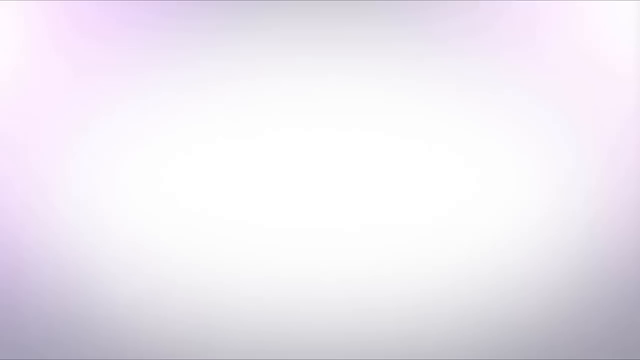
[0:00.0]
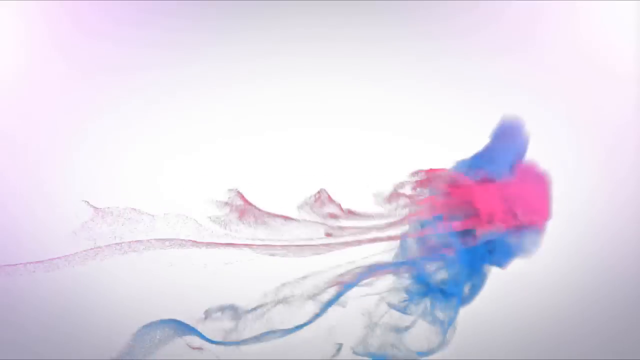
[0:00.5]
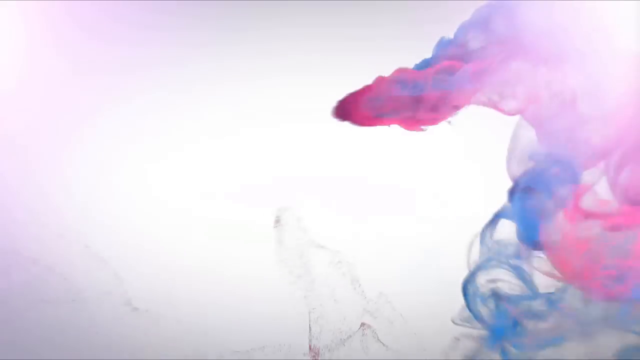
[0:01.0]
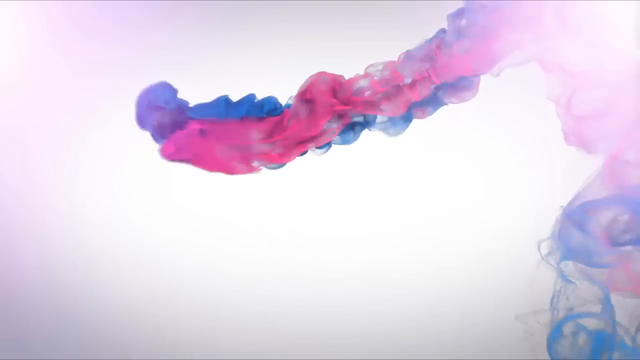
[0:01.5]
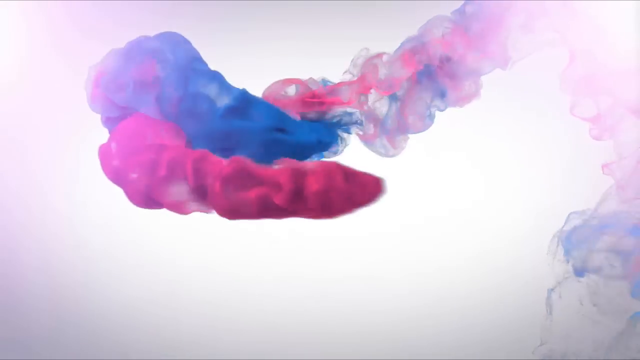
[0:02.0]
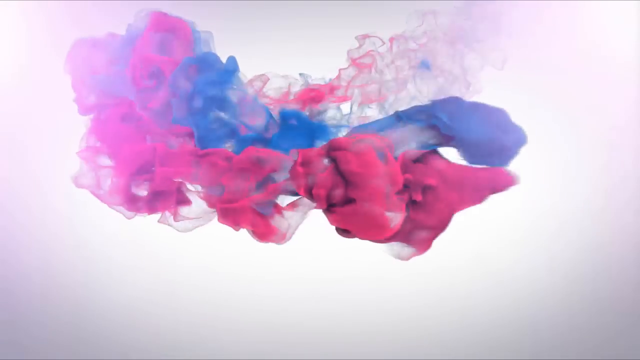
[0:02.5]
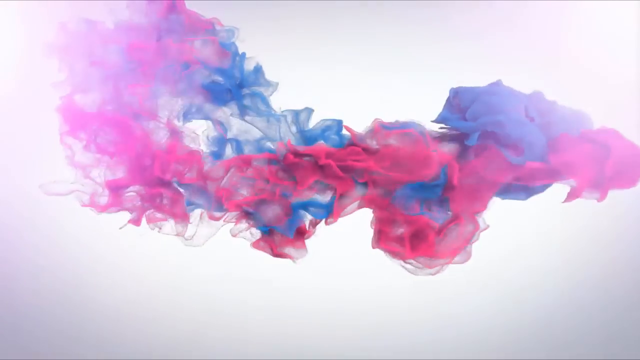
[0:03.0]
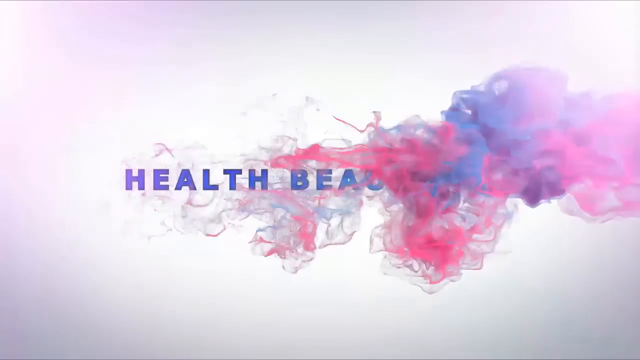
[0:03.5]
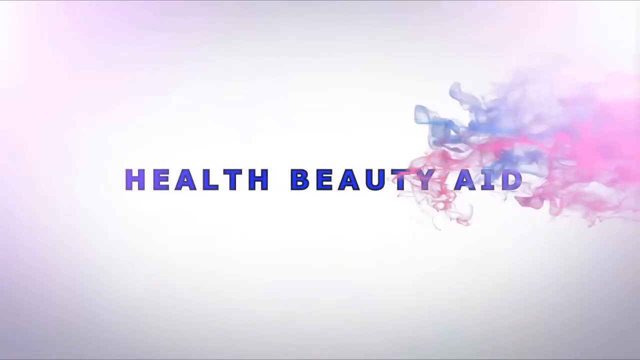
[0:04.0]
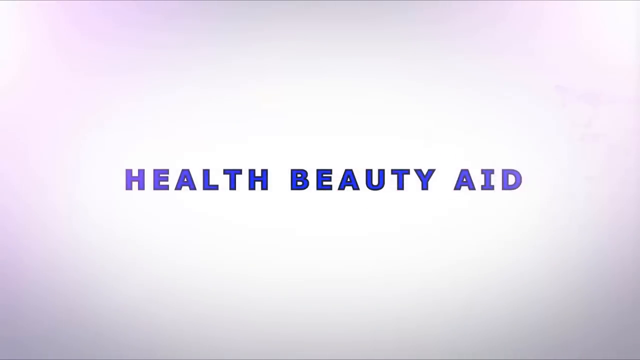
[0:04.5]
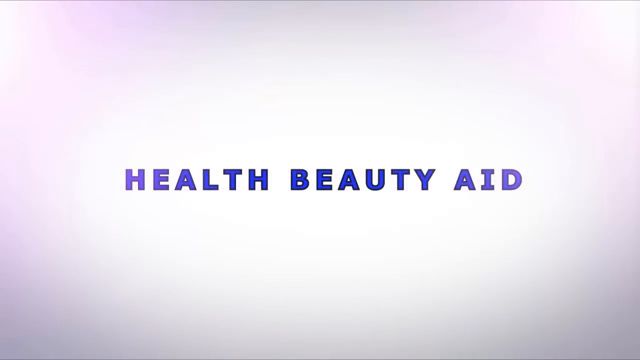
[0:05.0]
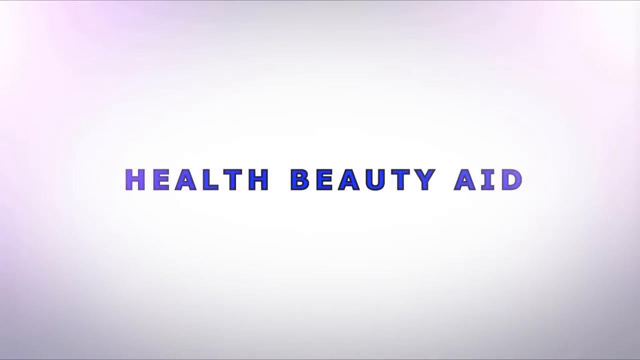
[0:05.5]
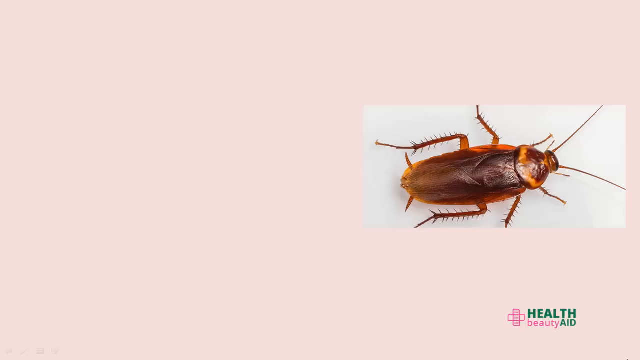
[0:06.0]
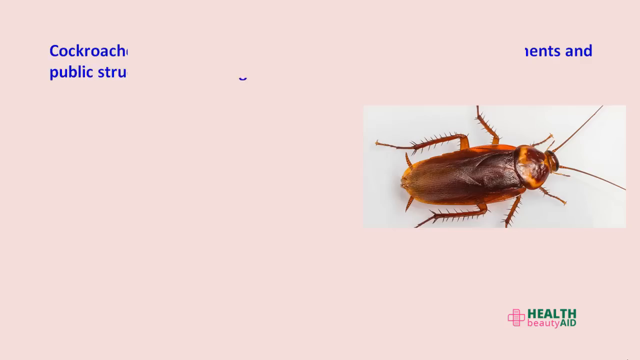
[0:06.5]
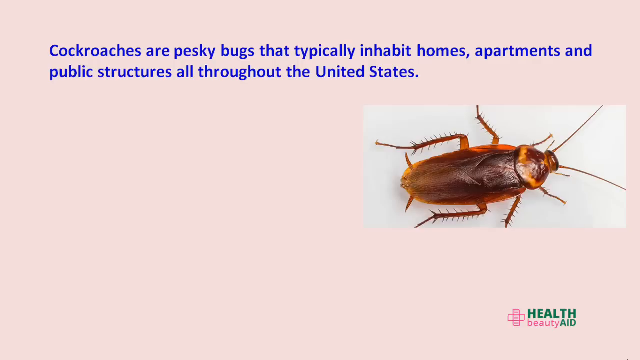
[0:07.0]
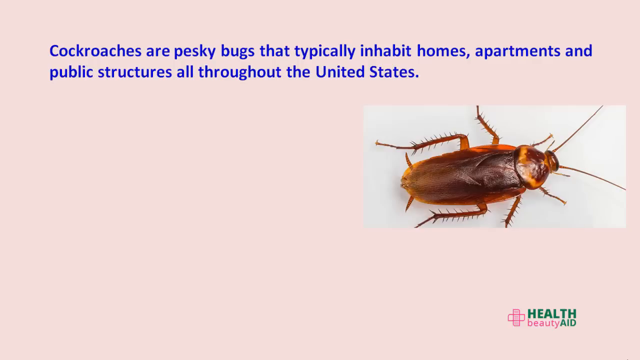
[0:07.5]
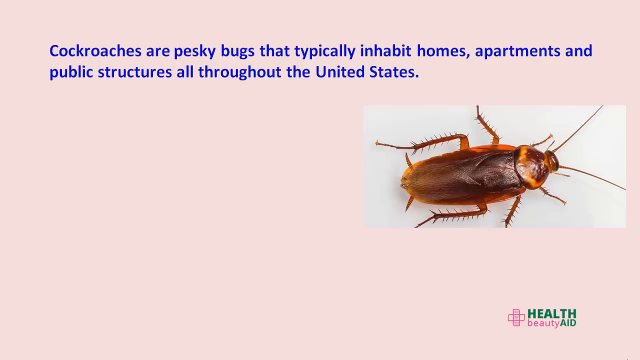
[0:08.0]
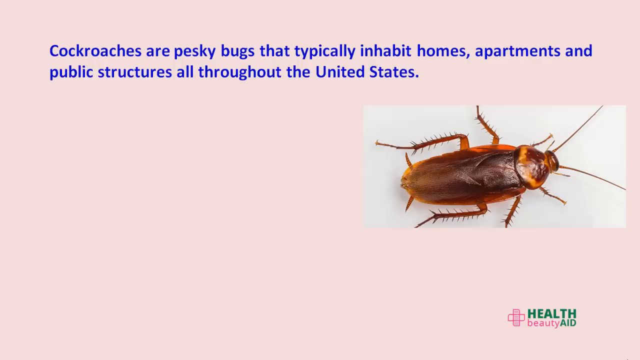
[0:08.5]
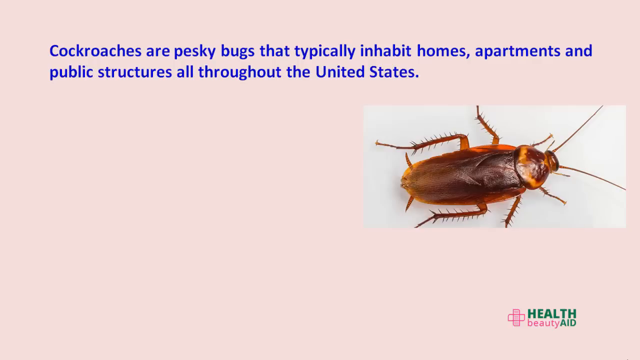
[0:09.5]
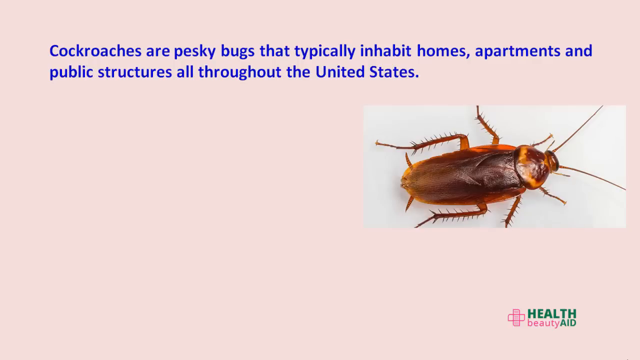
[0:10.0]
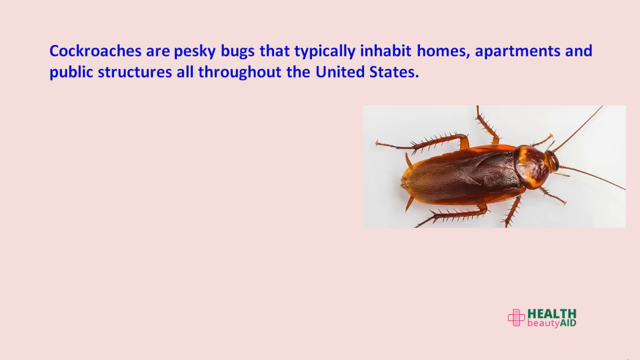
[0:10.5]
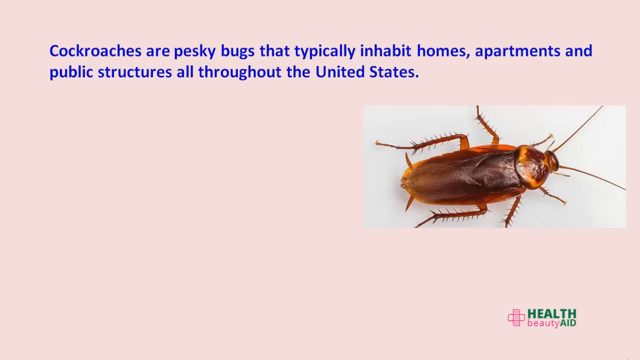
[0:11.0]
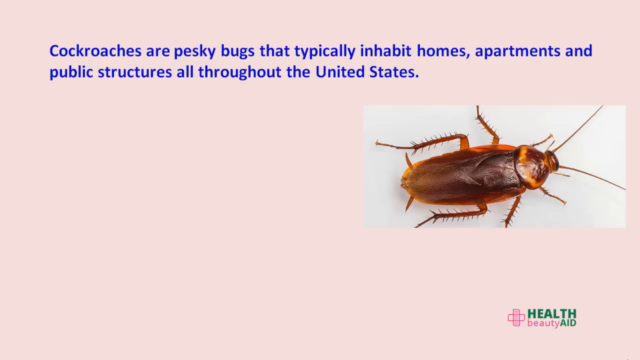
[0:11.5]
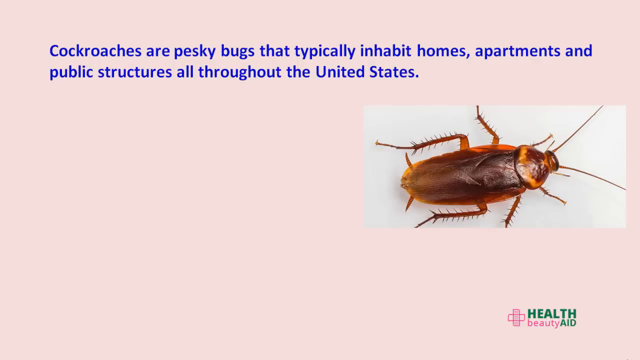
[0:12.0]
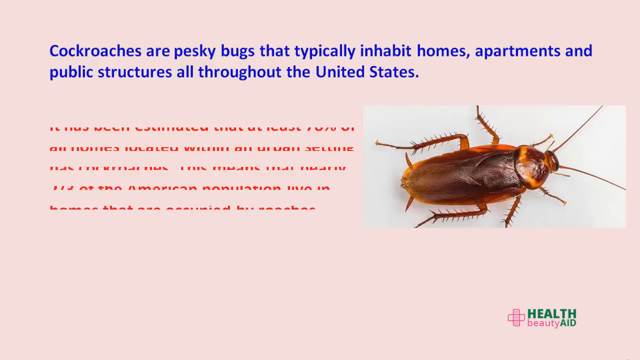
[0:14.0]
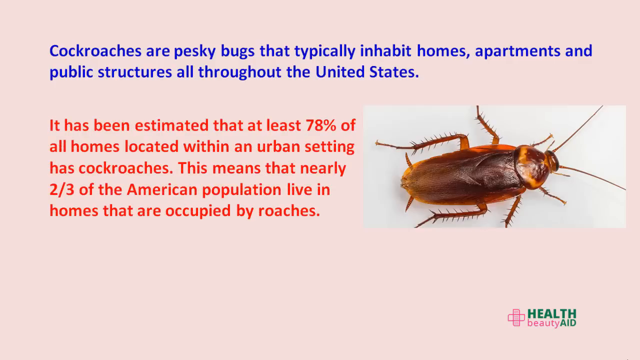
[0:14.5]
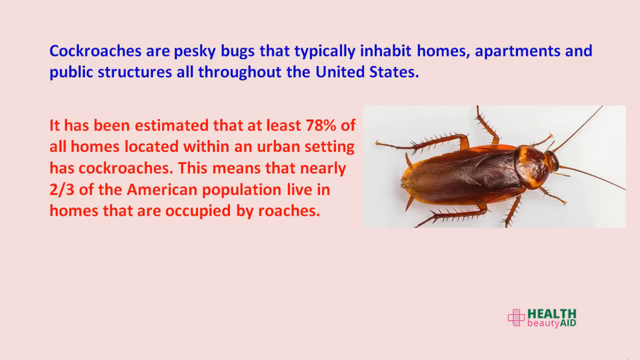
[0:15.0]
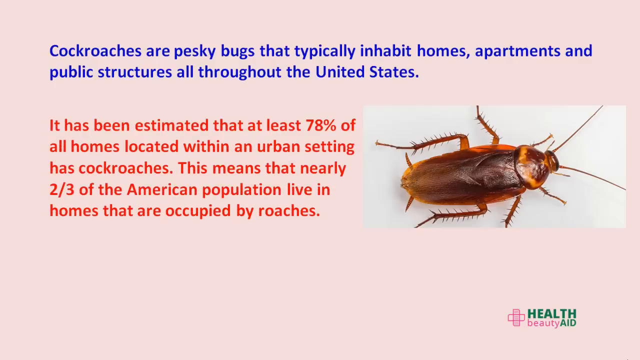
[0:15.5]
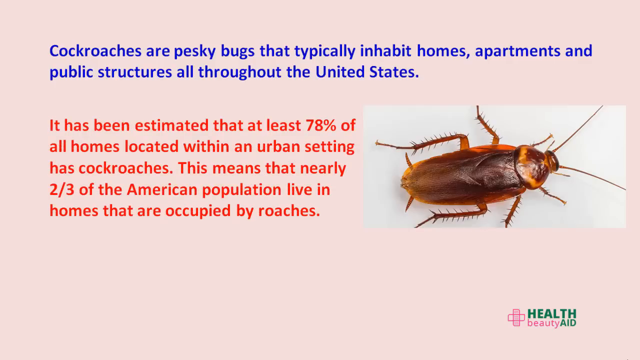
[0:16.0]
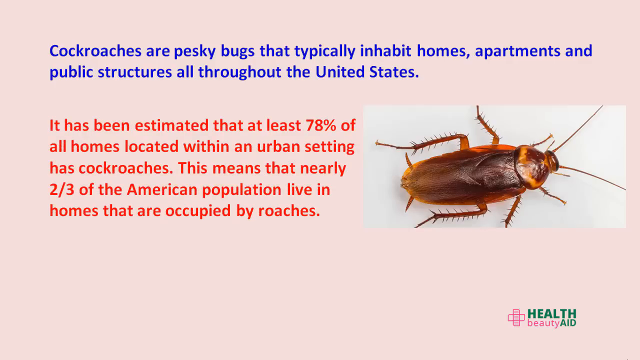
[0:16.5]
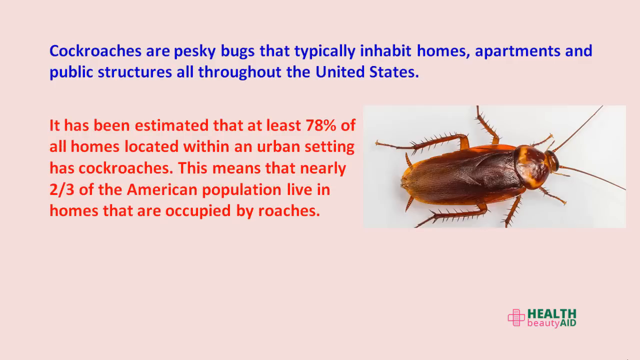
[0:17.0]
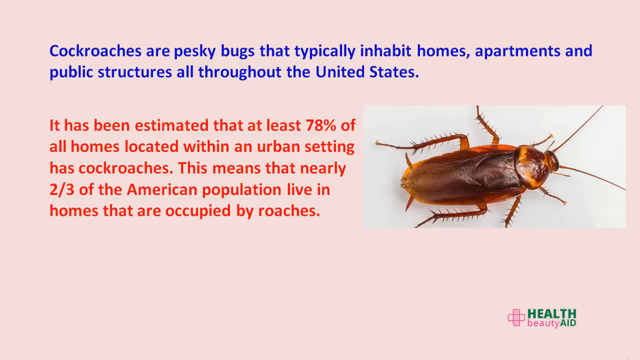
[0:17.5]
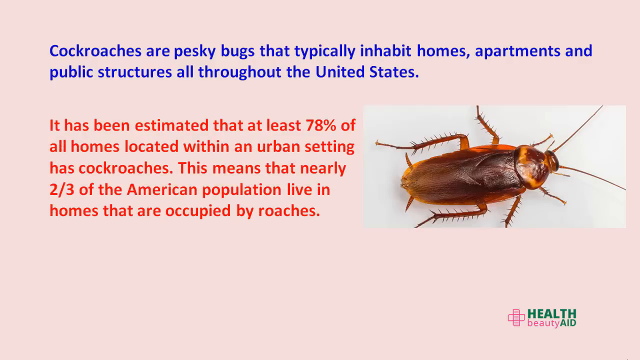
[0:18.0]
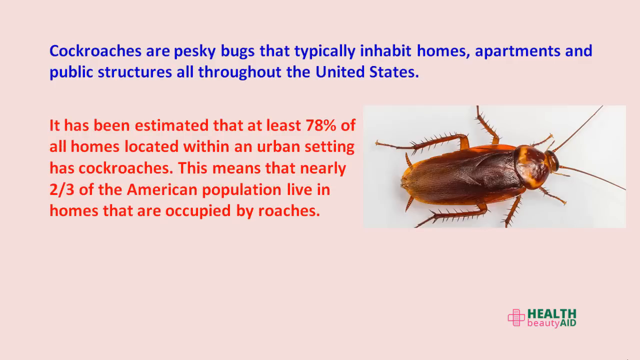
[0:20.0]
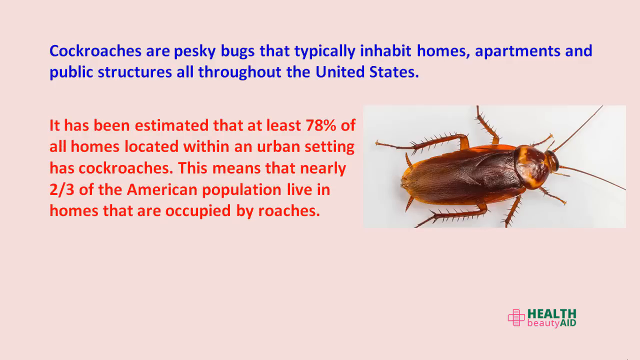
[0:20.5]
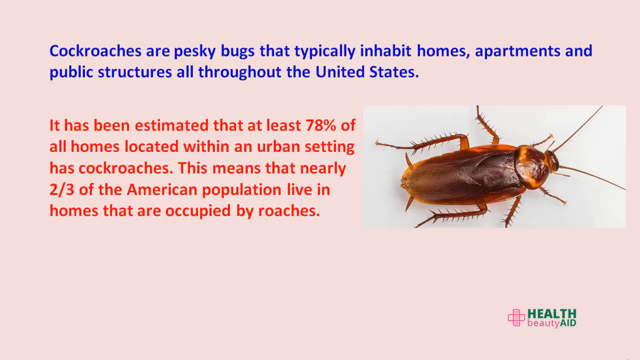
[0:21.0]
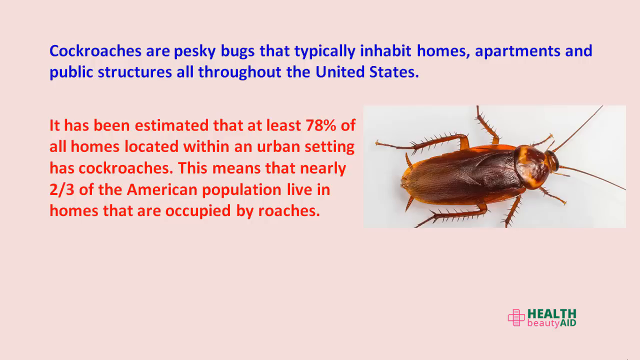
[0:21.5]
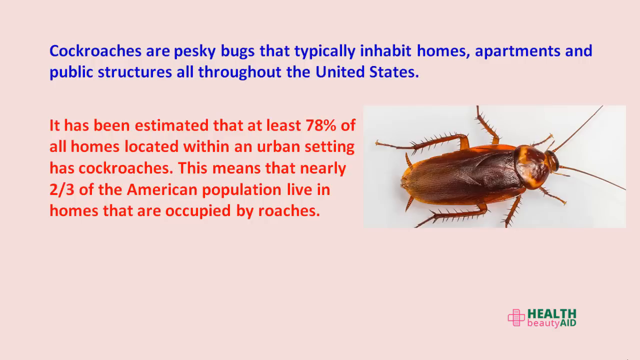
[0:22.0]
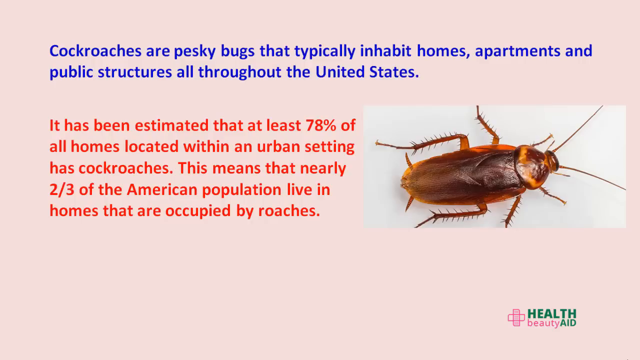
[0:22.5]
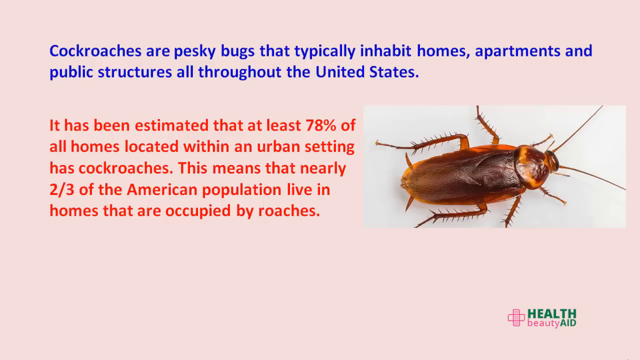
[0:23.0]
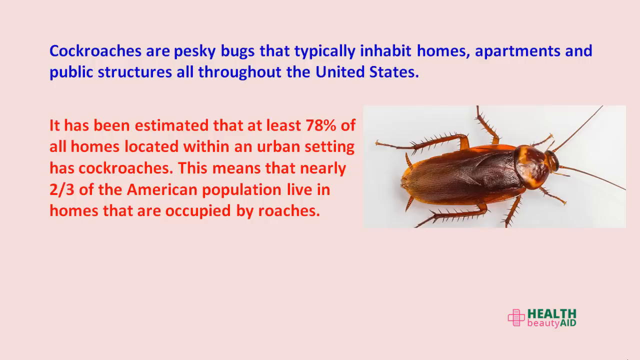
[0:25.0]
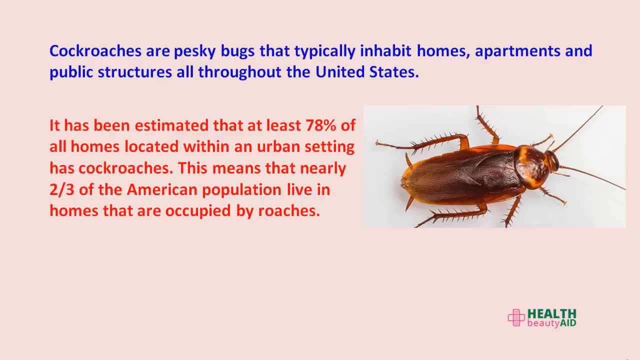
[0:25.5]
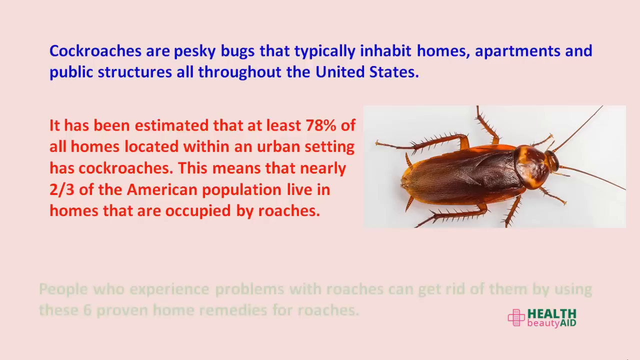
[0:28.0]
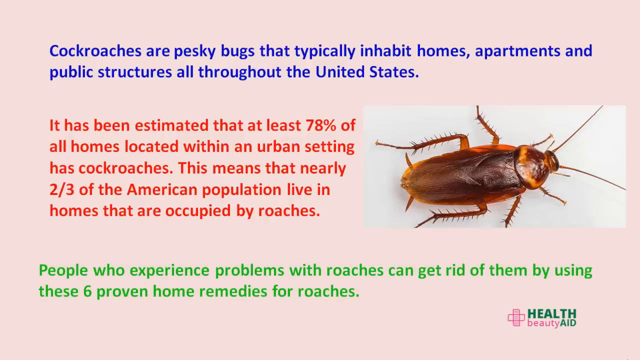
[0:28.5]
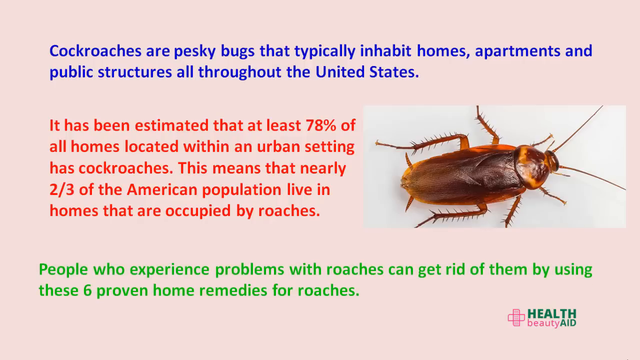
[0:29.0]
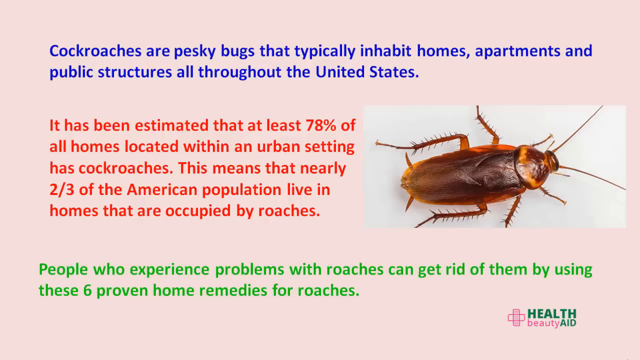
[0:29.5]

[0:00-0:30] A white screen appears, and a purple and red smear appears on it, with the lettering "health, beauty, aid" in the center. A pink background follows. At the bottom, green lettering reads "health"; below that, pink lettering reads "beauty"; then green lettering reads "aid." A pink band-aid square is on the left side. Next, a brown roach with tentacles and wings is on the right side, with a beige background behind it. Blue lettering at the top says "cockroaches are pesky bugs that typically inhibit homes, apartments, and public structures all throughout the United States." Orange lettering to the left of the roach reads "It has been estimated that at least 70% of all homes located within an urban setting has cockroaches. This means that nearly two-thirds of American population live in homes that are occupied by roaches." Green lettering below begins "people who experience problem with roaches."